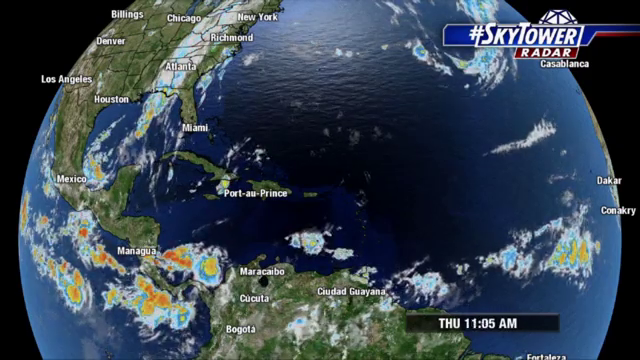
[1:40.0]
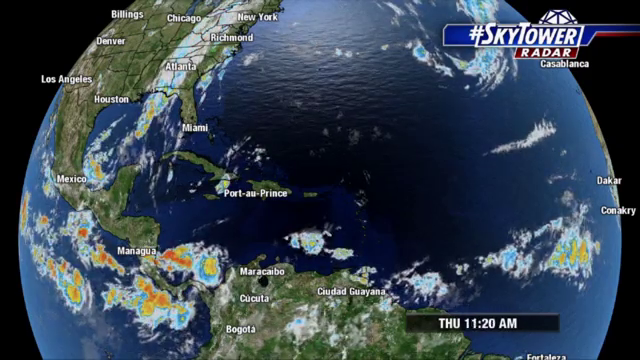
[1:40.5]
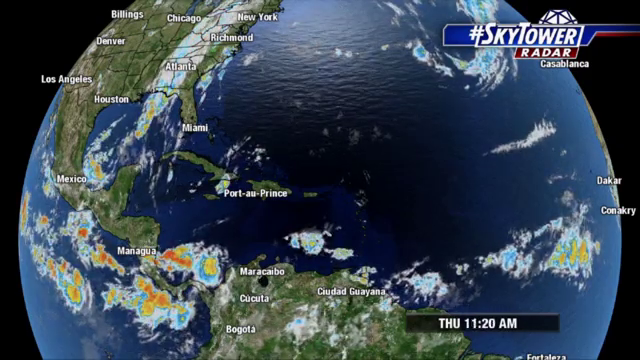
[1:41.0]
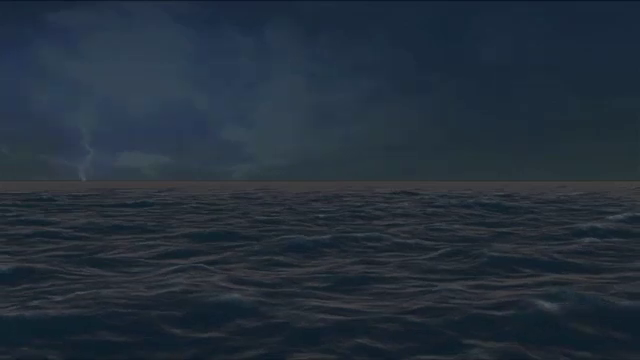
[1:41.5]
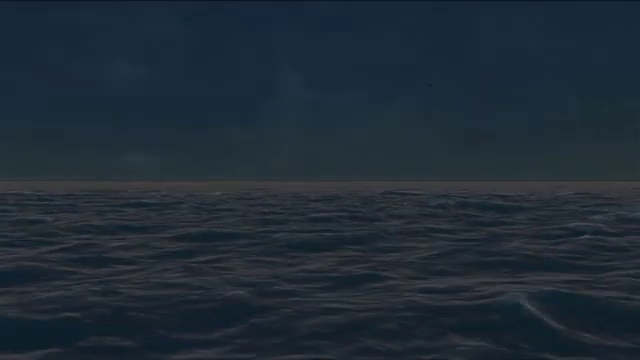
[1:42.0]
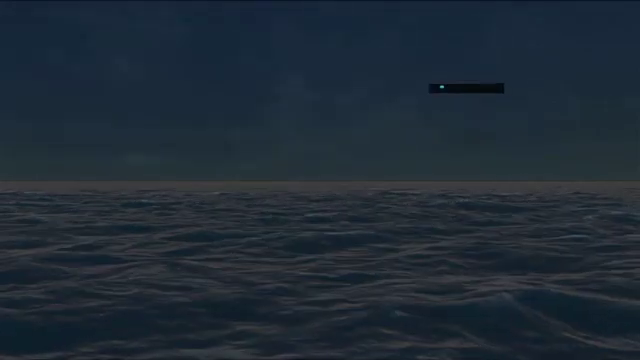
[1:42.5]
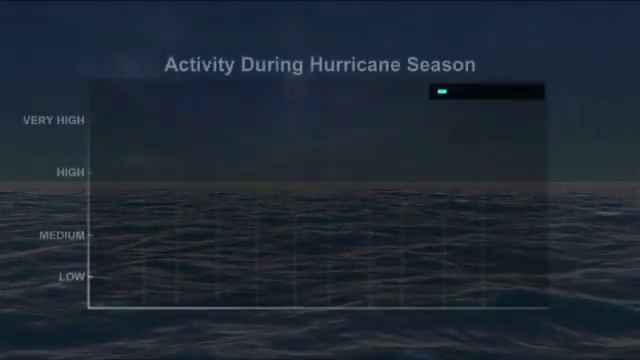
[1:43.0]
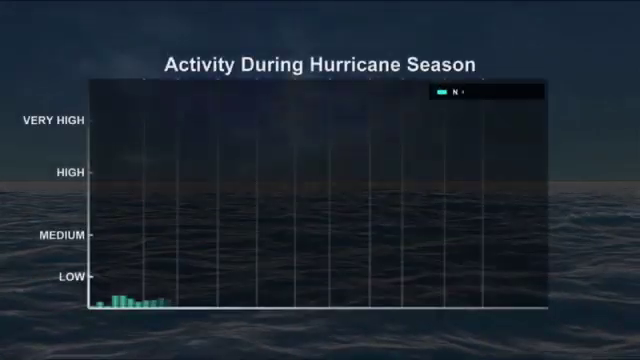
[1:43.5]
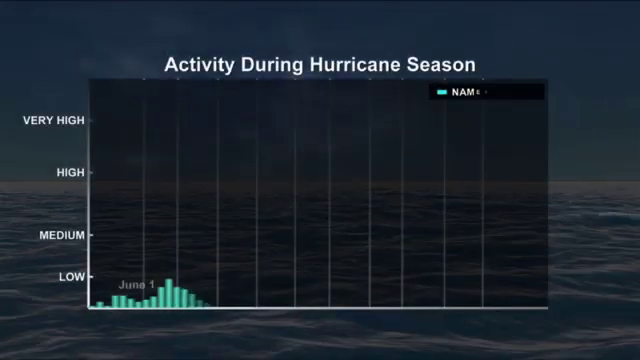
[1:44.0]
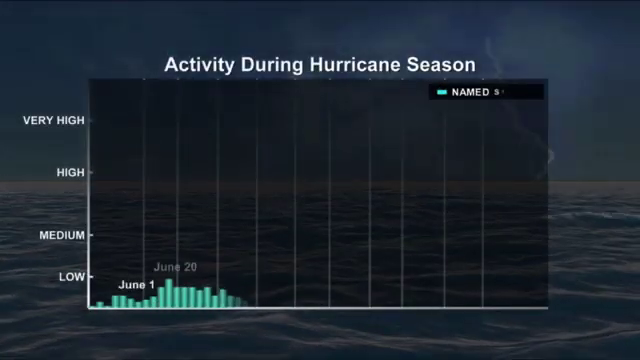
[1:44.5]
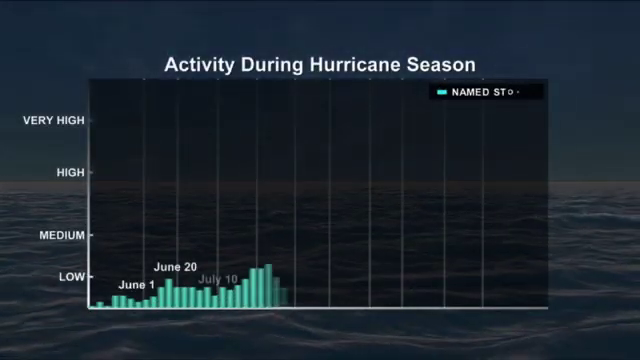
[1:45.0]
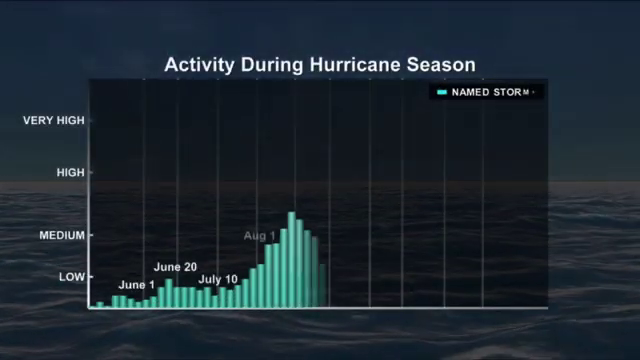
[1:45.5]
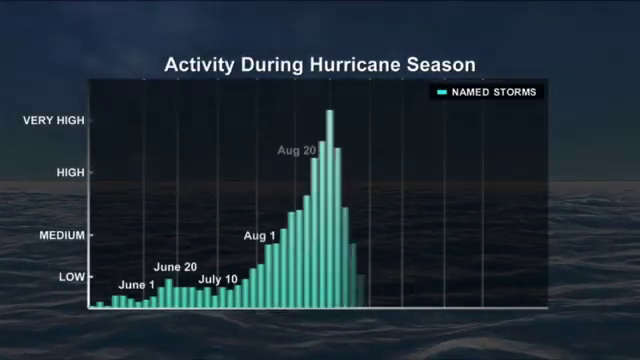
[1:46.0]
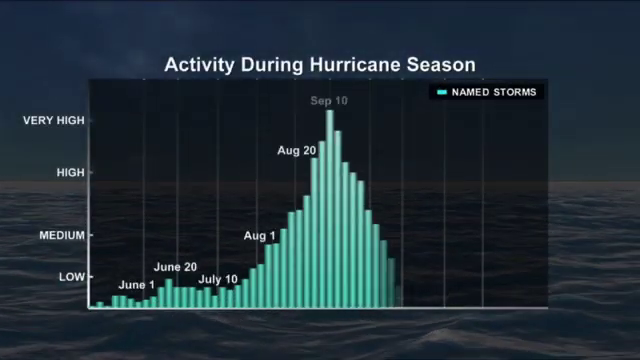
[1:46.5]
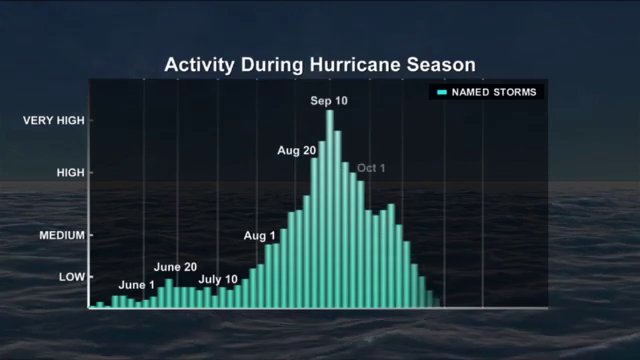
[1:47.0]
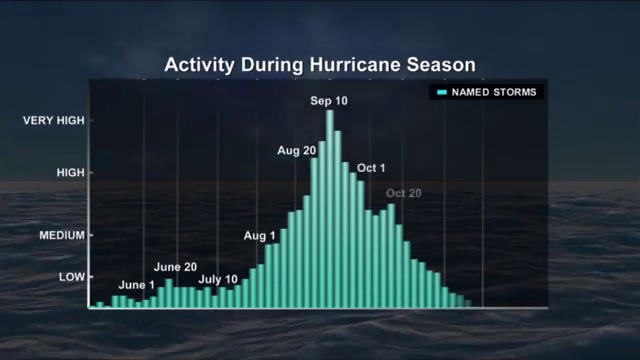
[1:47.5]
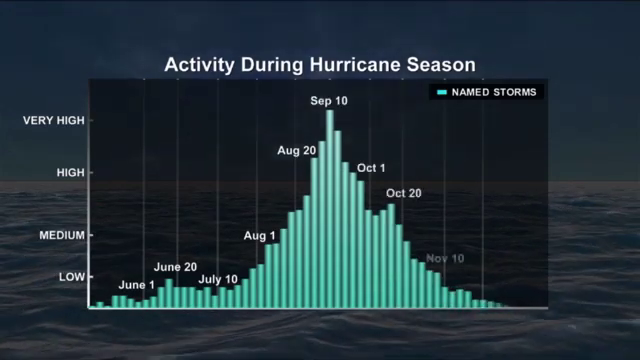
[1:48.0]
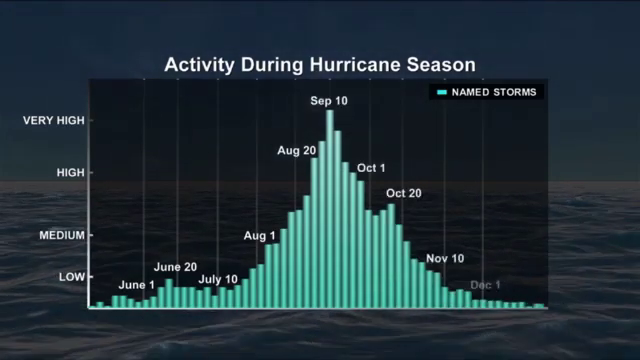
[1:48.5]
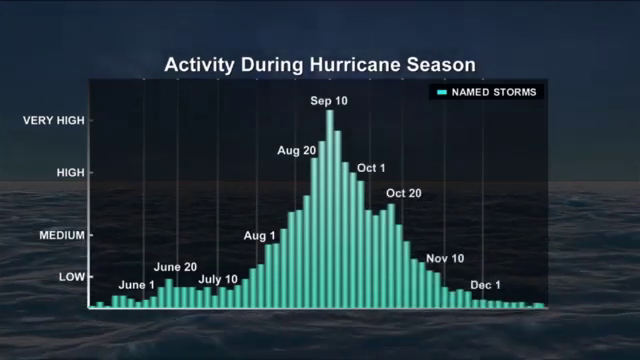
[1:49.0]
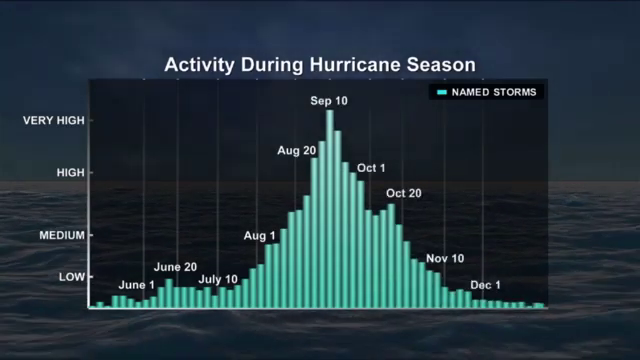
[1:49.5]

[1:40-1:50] A picture of the ocean appears, and at the beginning lightning hits the water. Then a chart appears titled "activity during hurricane season," with "very high," "high," "medium" and "low" on the left-hand side. The season seems highest in August, September and October. Activity starts slow in June, very low and minimal, with a big peak on August 20th and the highest on September 10th, then decreases again until it is almost minimal in December.